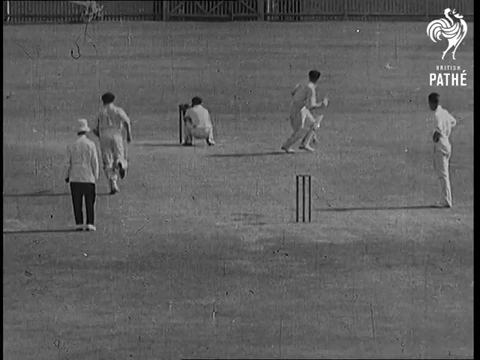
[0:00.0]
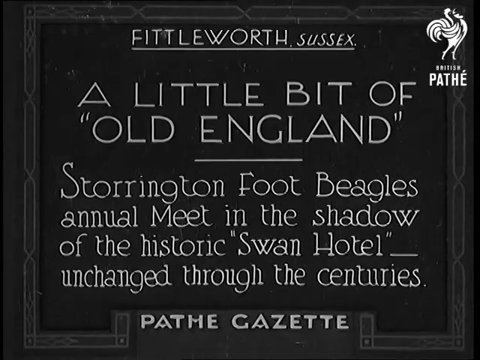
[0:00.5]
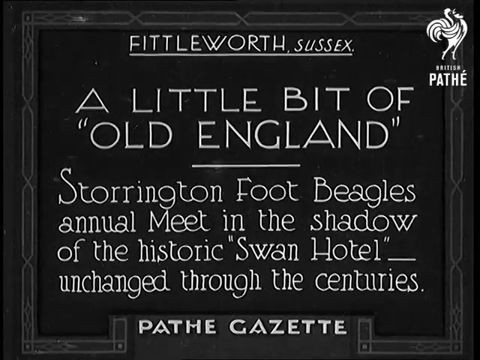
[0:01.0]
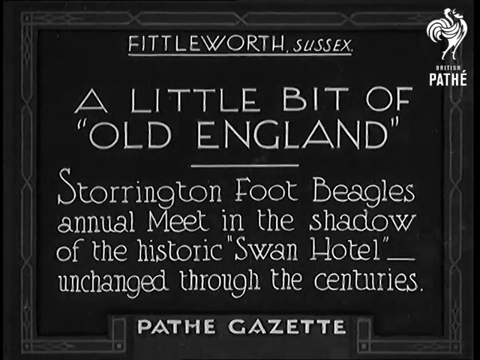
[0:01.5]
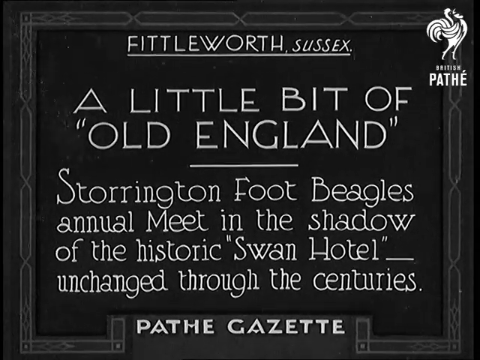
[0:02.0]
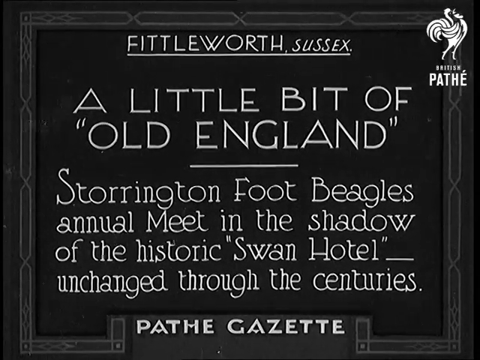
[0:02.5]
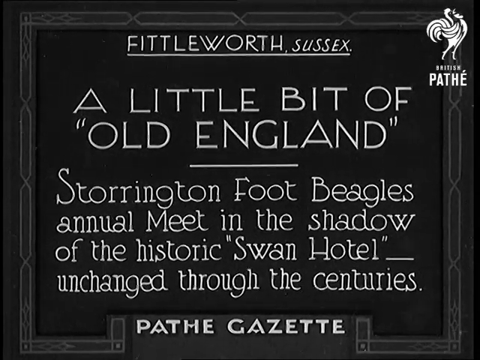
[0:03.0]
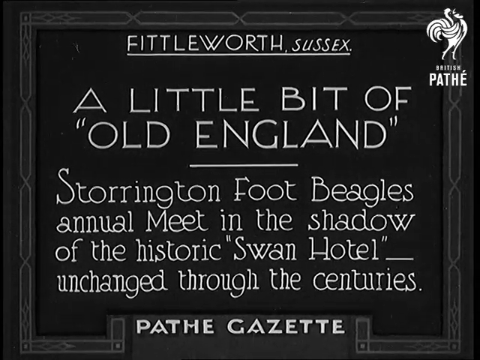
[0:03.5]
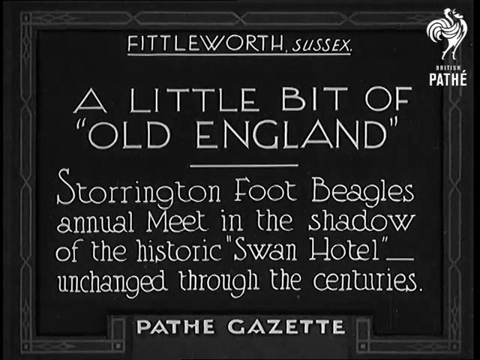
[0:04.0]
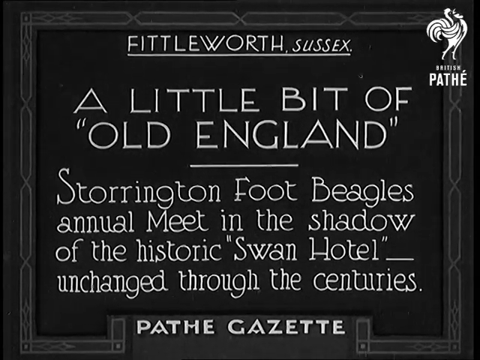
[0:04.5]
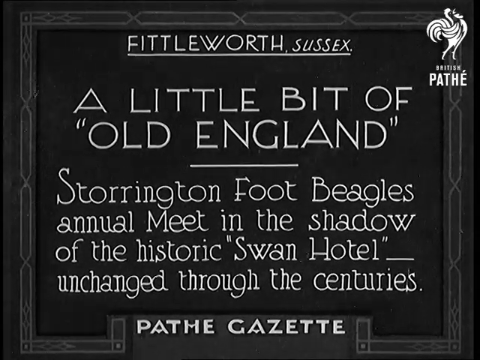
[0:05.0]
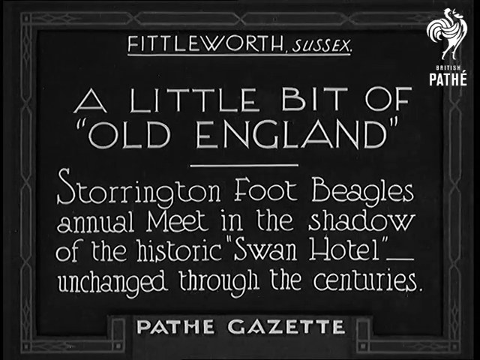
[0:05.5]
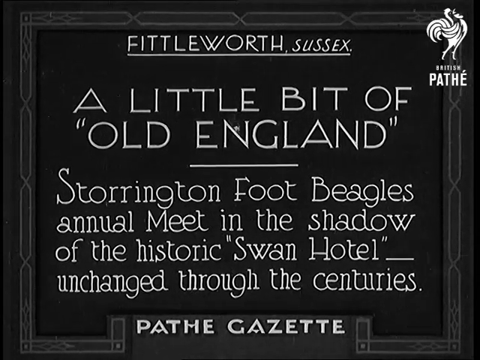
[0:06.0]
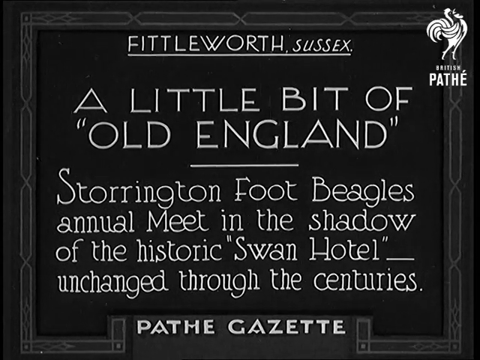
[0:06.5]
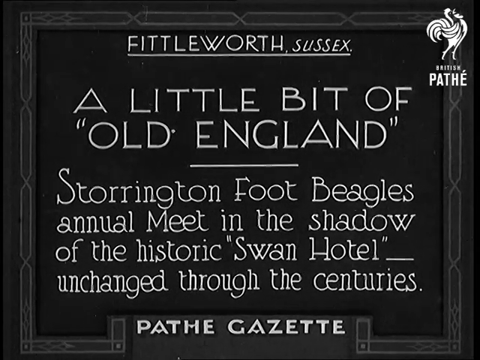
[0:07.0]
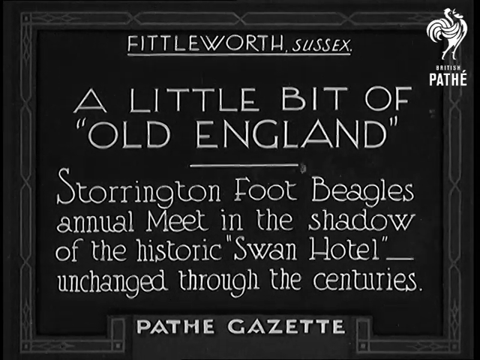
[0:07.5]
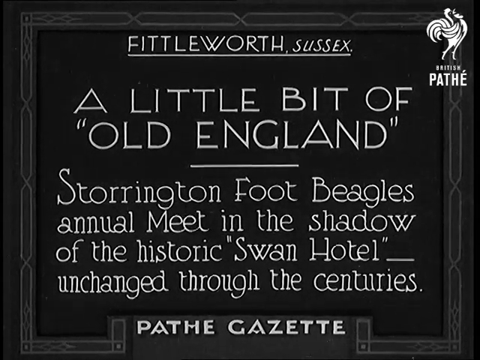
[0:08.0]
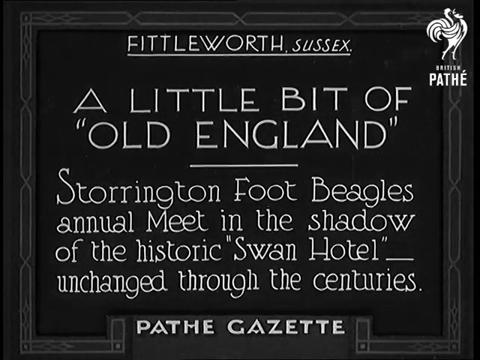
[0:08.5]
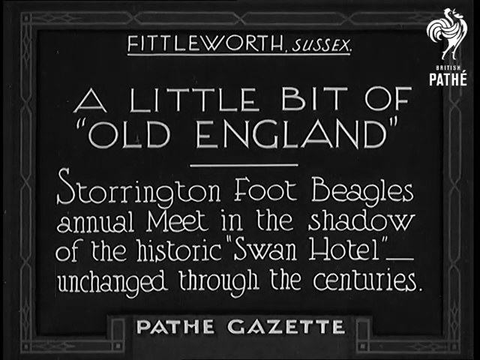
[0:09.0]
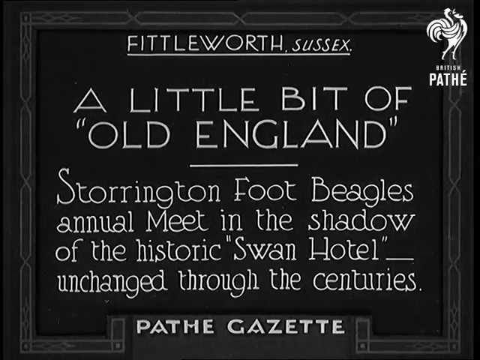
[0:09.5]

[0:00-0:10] In black and white, what looks like a cricket game is underway. The three poles on each side of the cricket field are visible, and five men in white suits are playing cricket, all facing away from the camera. The scene then transitions to a black screen with white text, with a little static white around it, so it looks like a very old-fashioned video. At the top the text reads "Fiddleworth, Sussex", in the middle "a little bit of old England", and at the bottom "Storrington foot beagles, annual meet in the shadow of the historic Swan Hotel, unchanged through the centuries." Below that is "Pathé Gazette". The screen appears to be bordered by a kind of fancy white border, and at the top right there is a rooster logo with the word "Pathé" below it. The video finishes on the text.